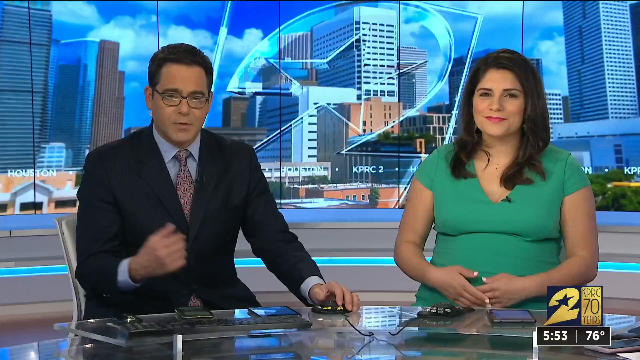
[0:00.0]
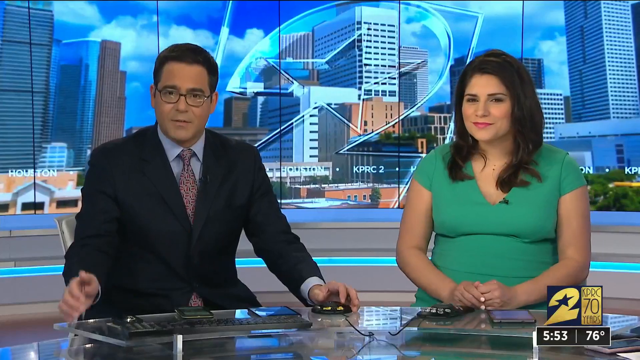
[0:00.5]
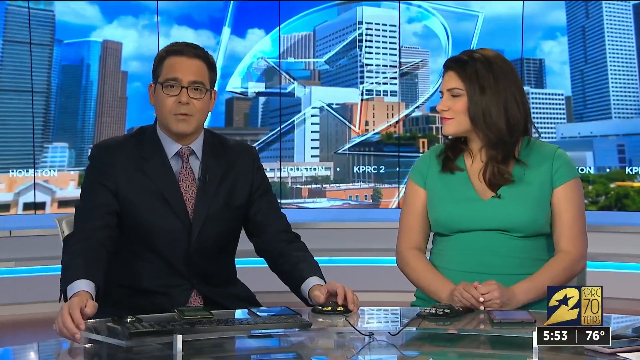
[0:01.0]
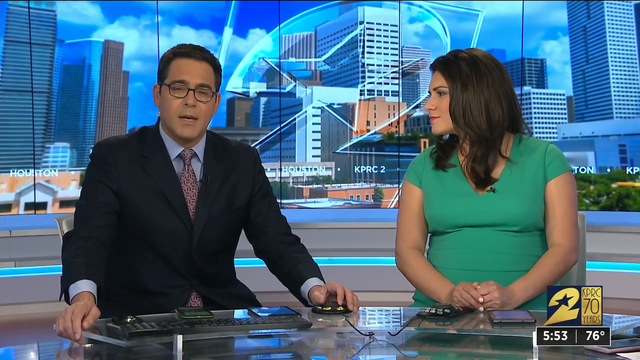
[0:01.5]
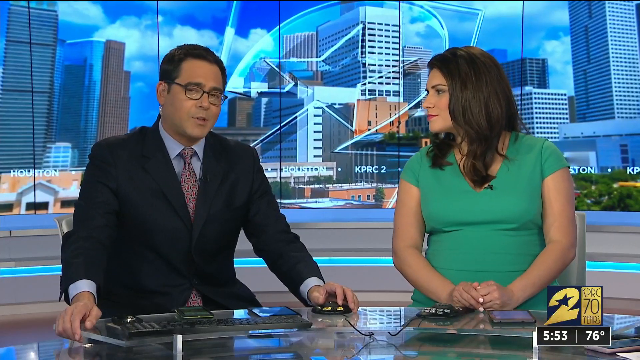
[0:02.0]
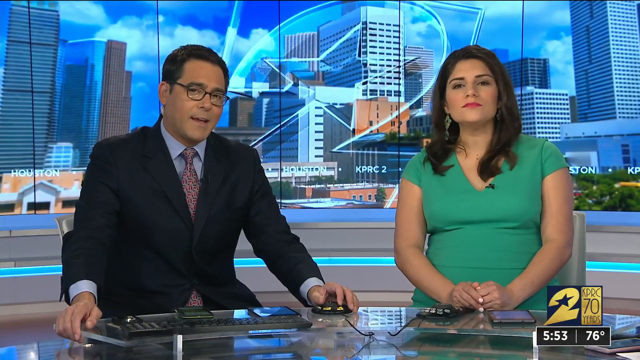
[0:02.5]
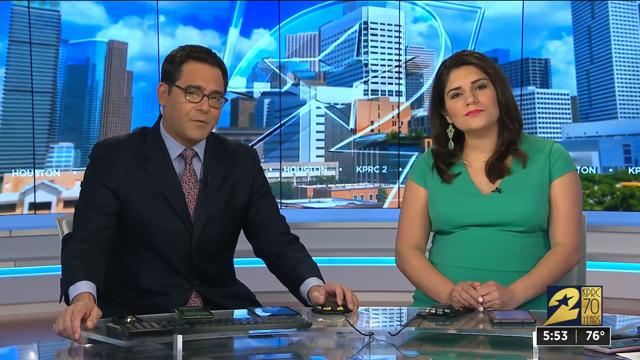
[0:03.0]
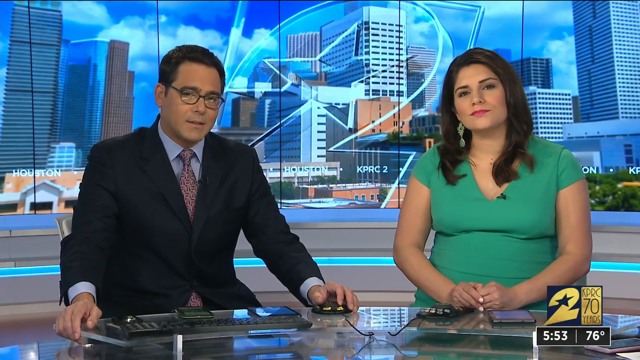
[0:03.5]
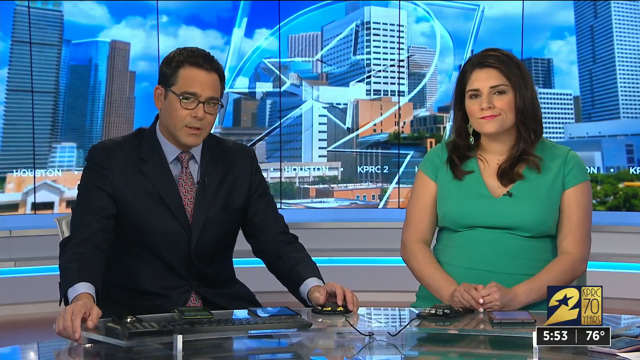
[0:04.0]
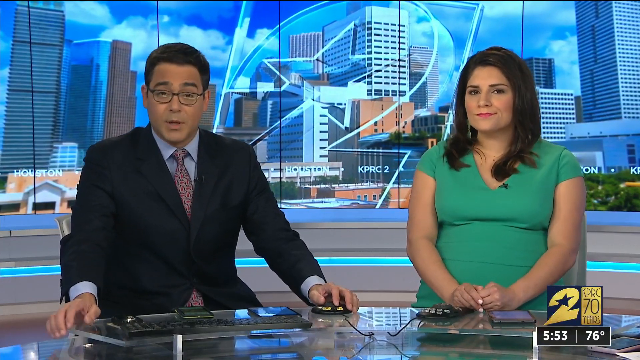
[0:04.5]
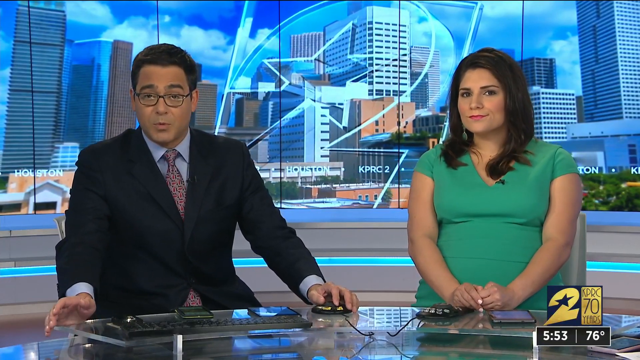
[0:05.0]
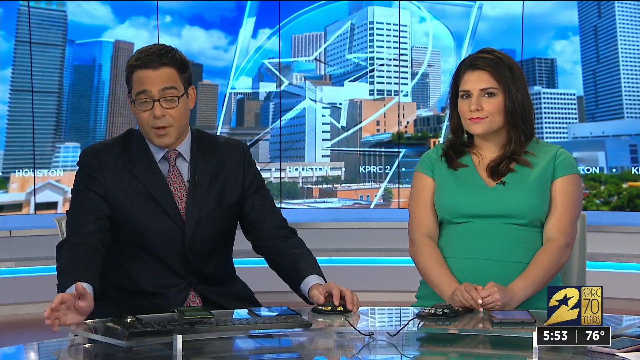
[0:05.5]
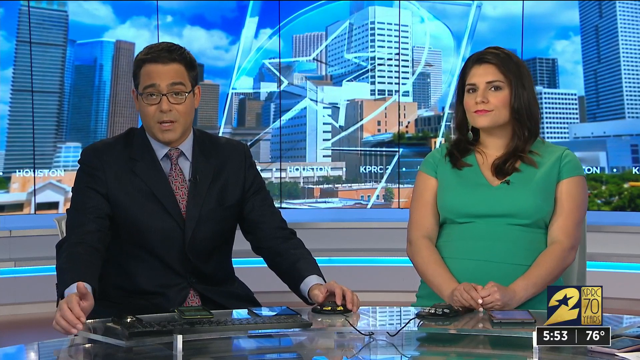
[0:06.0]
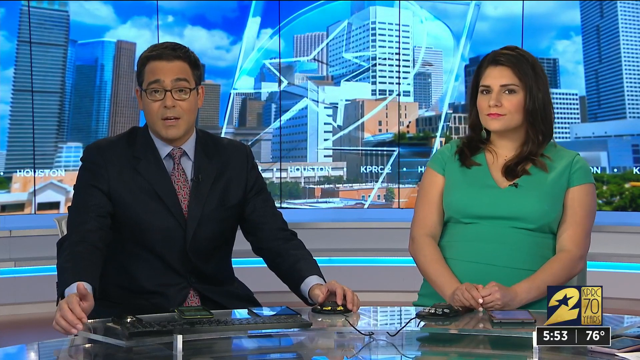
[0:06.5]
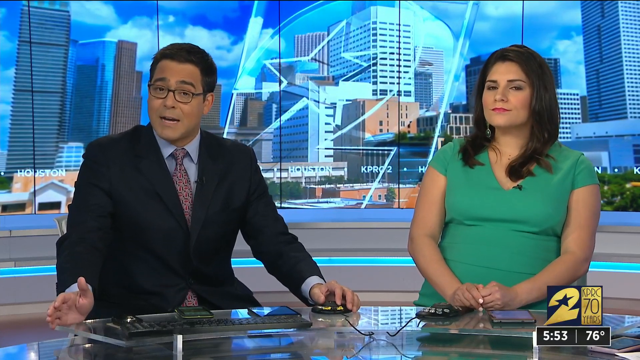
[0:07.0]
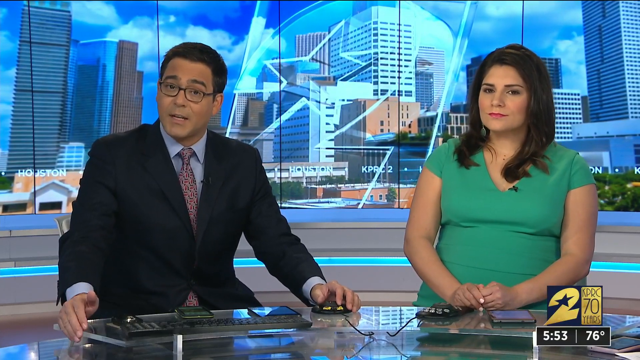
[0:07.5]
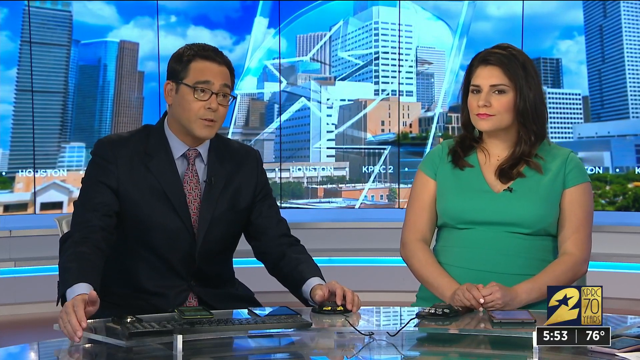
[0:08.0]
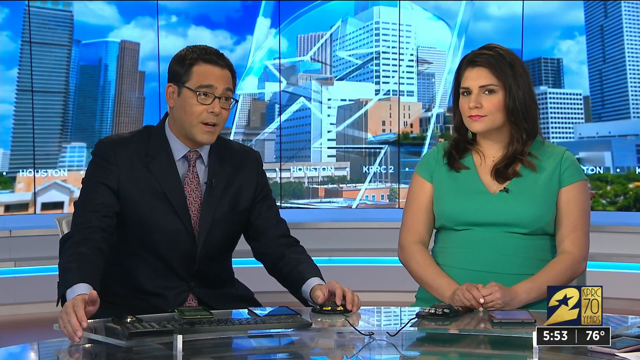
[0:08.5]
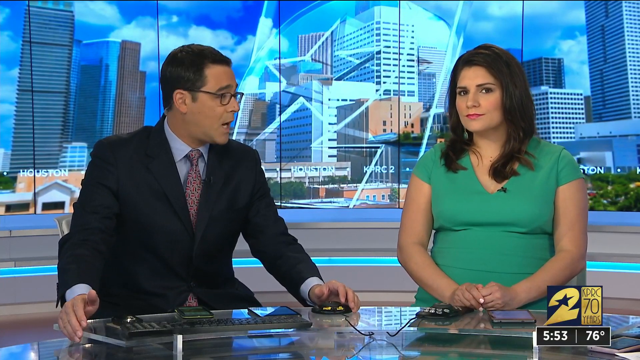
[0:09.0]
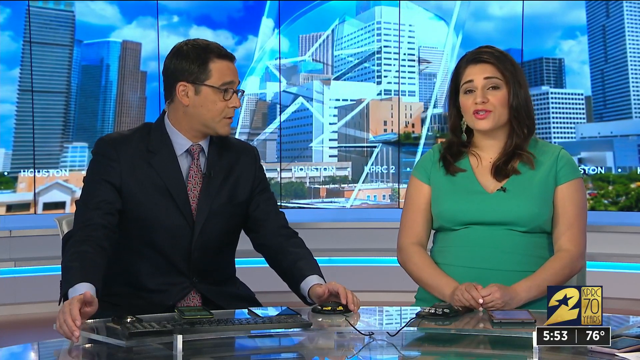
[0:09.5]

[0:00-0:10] Two news reporters sit at a desk, and behind them a screen shows the Houston skyline. The male reporter has dark brown hair and glasses and wears a black suit. On the right is a woman reporter with shoulder-length dark brown hair in a green short-sleeved V-neck shirt; she kind of looks pregnant. In the bottom right corner is a logo of a yellow number two on what looks like a black background, with a star in the middle of the two. To the right of it, a yellow rectangular box reads "KPRC 70 years". It is 5:53 a.m. and 76 degrees. The male reporter speaks while the woman kind of looks at him and then back at the camera, kind of nodding along as he speaks, and he turns to look at her.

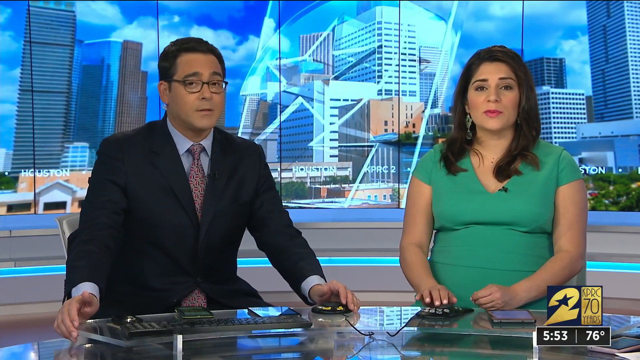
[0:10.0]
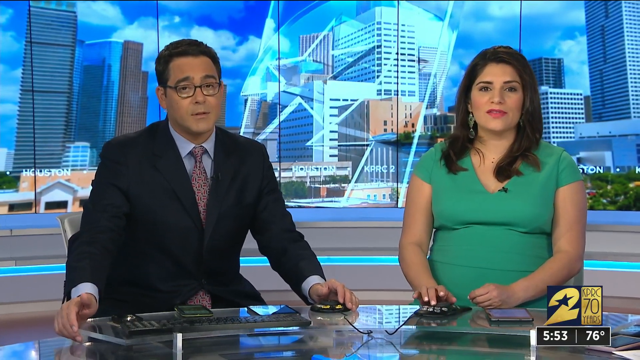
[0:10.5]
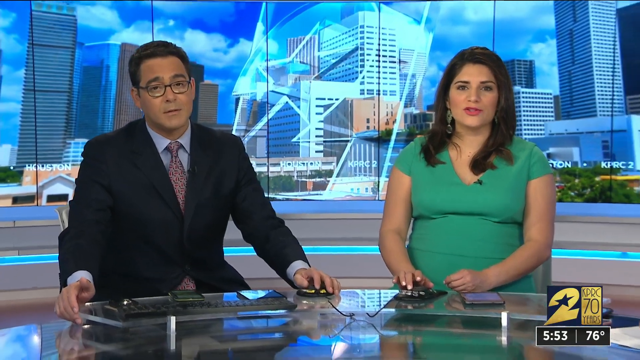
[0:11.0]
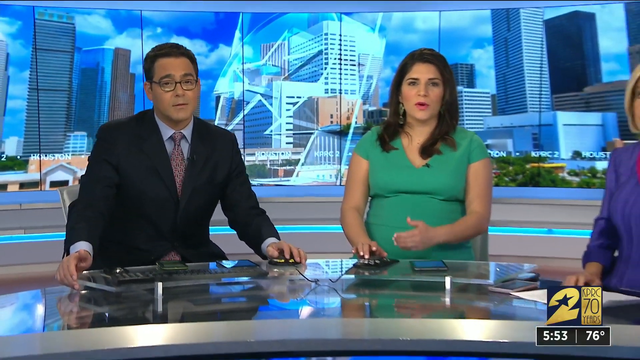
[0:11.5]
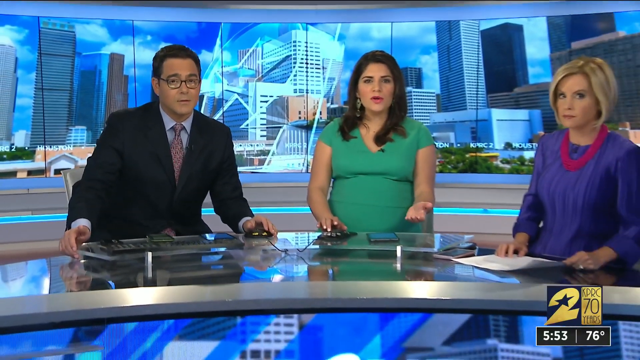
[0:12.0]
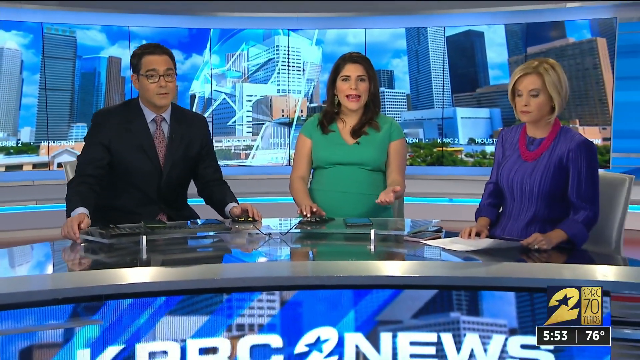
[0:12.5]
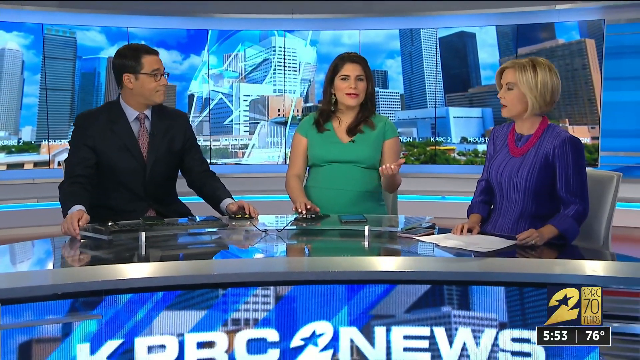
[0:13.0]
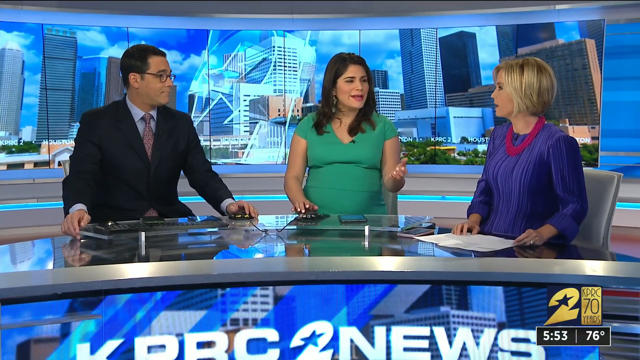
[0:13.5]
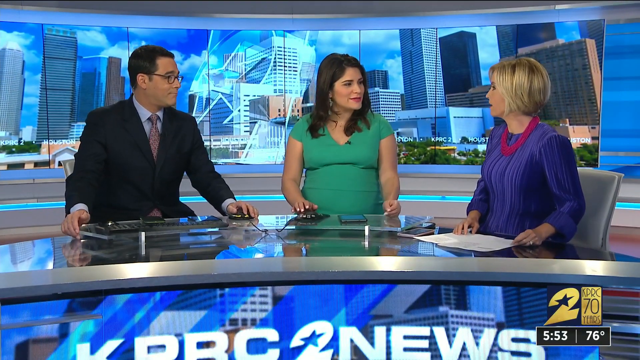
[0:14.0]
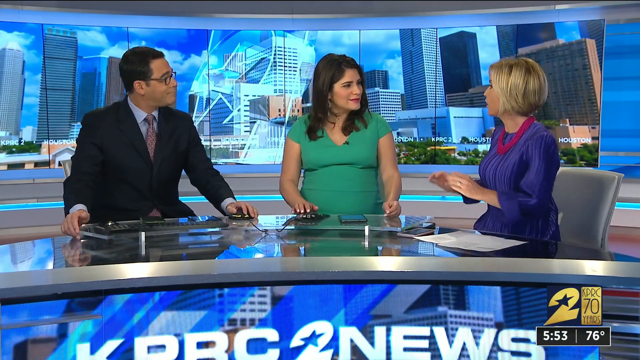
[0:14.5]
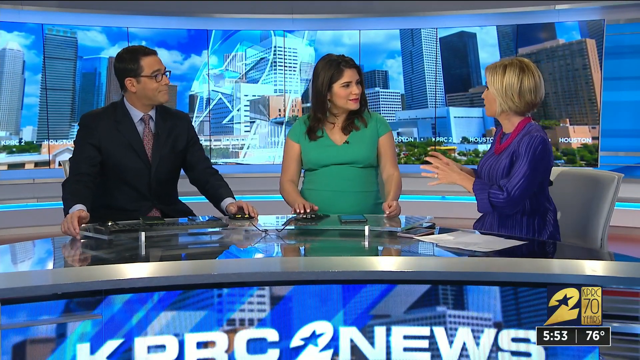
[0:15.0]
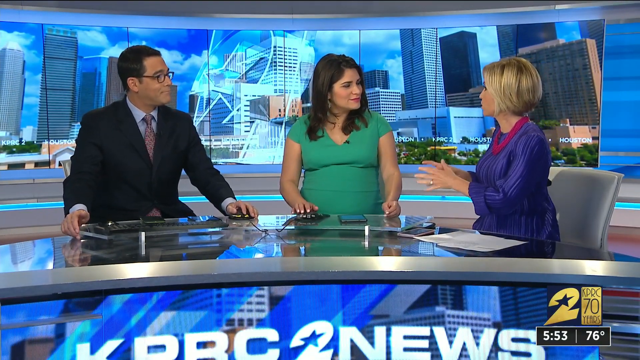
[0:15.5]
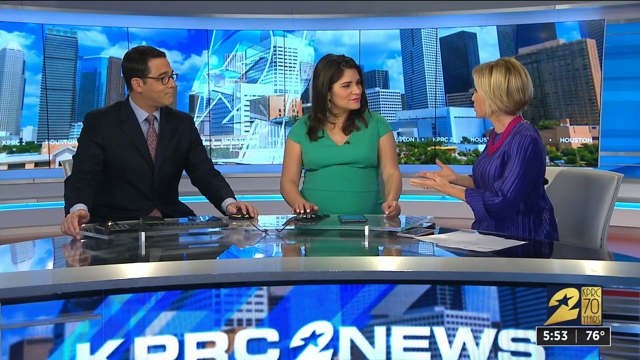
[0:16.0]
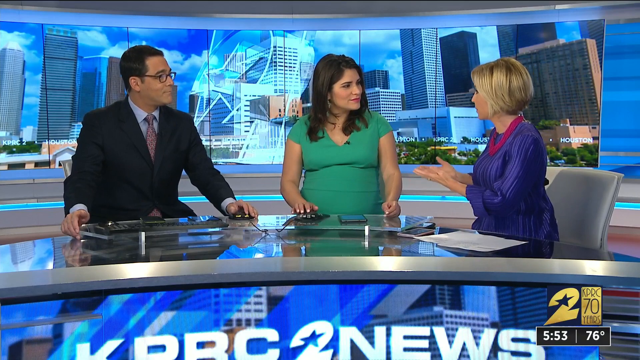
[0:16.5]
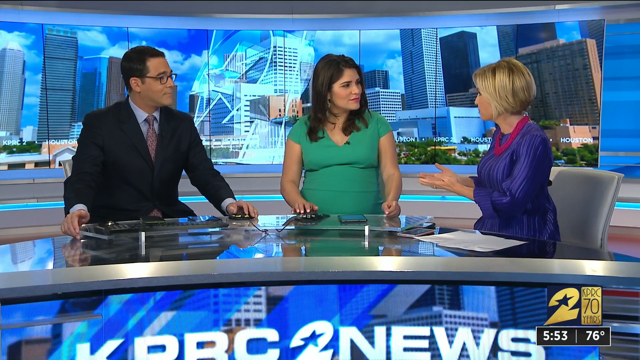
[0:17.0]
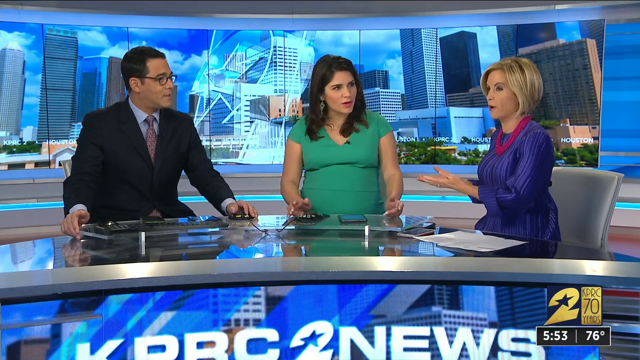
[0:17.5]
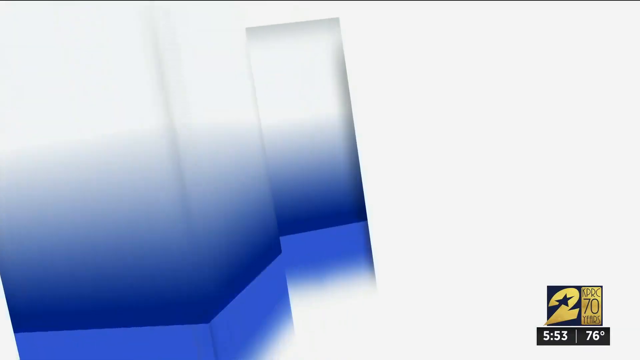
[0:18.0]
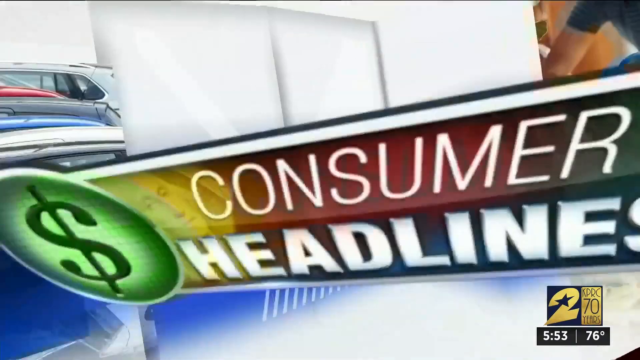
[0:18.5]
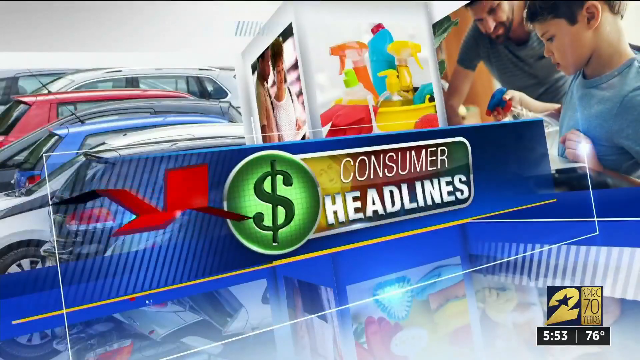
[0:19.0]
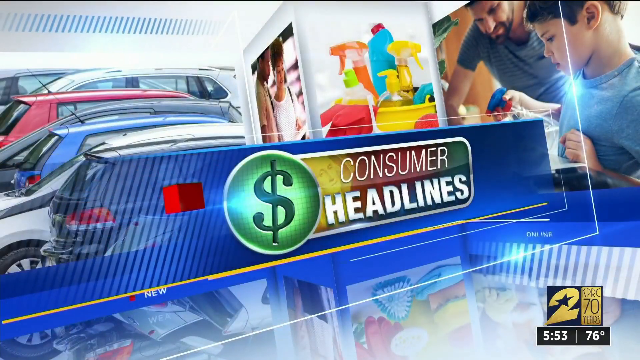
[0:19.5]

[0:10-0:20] Two news reporters sit at a desk: a man in a black suit with dark brown hair and glasses on the left, and a woman in a green short-sleeved V-neck shirt with shoulder-length dark brown hair on the right. The woman is talking as the camera zooms out to reveal a third person on the right, a woman with short blonde hair in a long-sleeved purple shirt with a thick, dark pink necklace. The woman in green turns to the woman in purple as she speaks, and then the woman in purple begins talking. She kind of raises her hands in front of her with her palms facing down, then kind of flips them so the palms face up, while the male reporter kind of nods along. The screen then changes to a collage of images: a few cars parked in a parking lot, what looks like a man and a woman in a store looking down at something, cleaning products, and a young boy and his dad cleaning. A blue rectangular box reads "consumer headlines".